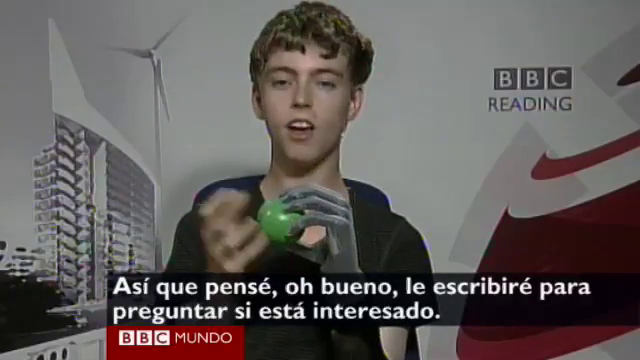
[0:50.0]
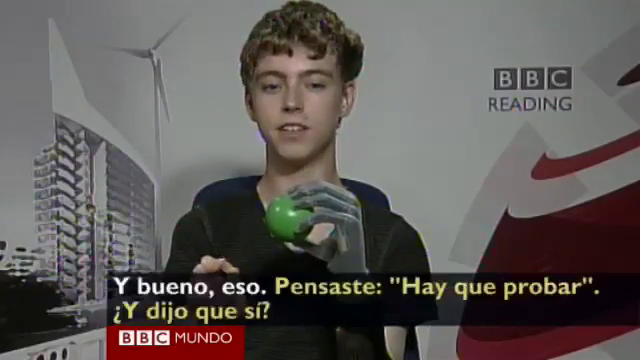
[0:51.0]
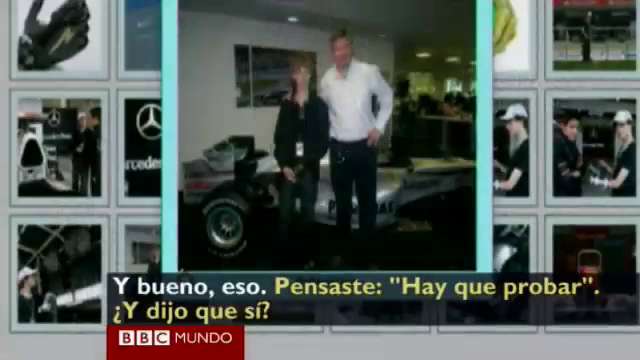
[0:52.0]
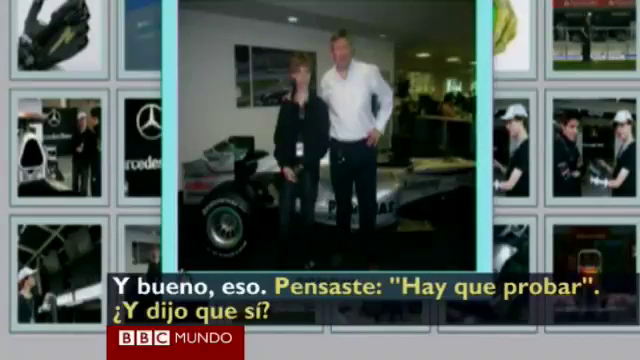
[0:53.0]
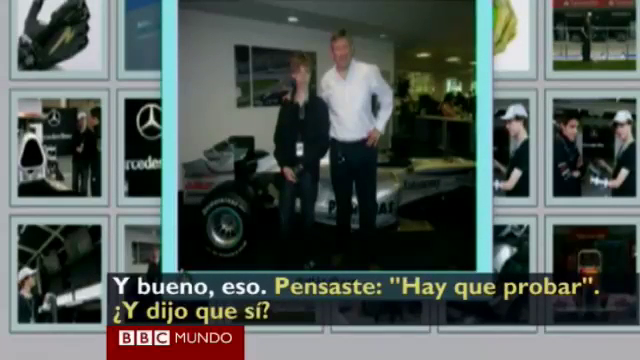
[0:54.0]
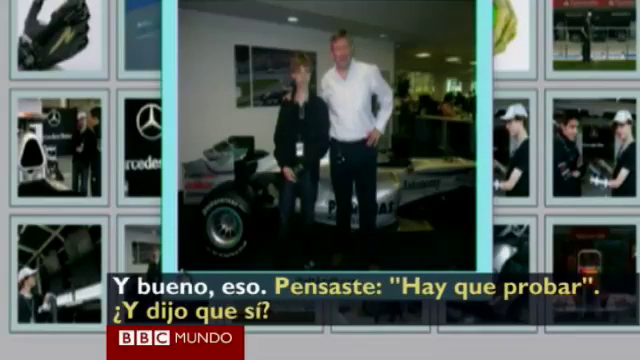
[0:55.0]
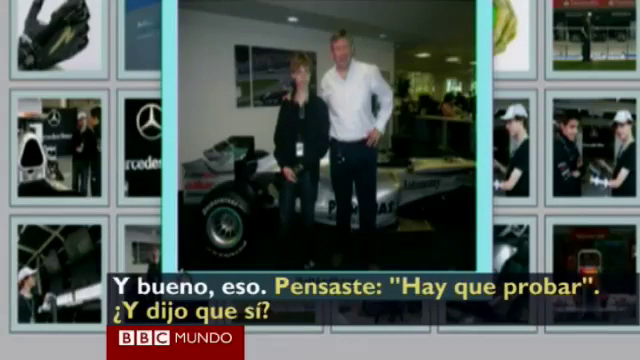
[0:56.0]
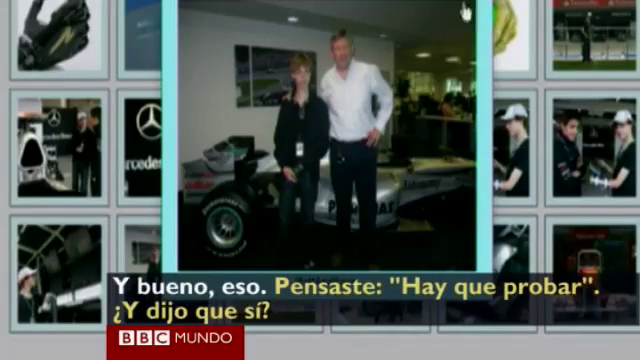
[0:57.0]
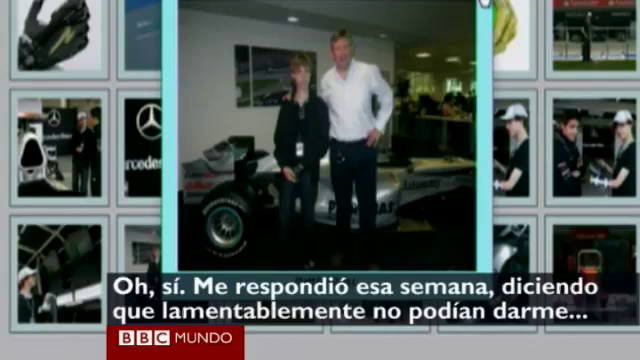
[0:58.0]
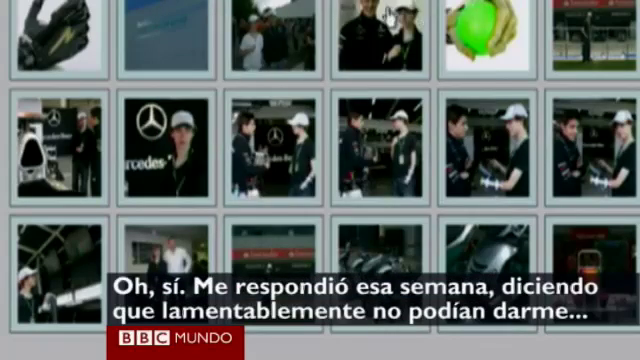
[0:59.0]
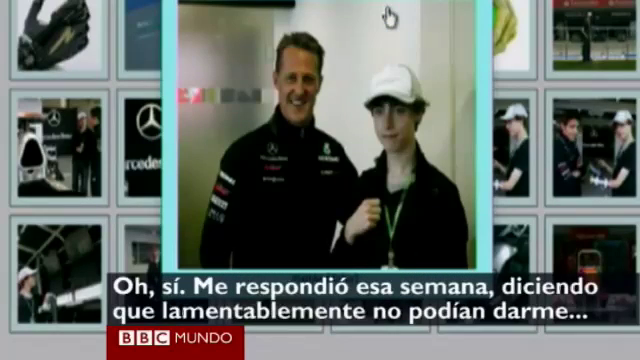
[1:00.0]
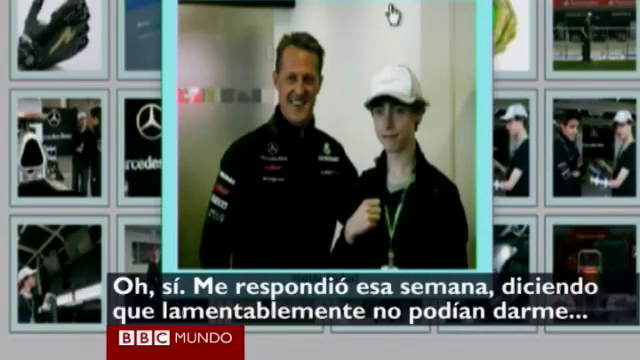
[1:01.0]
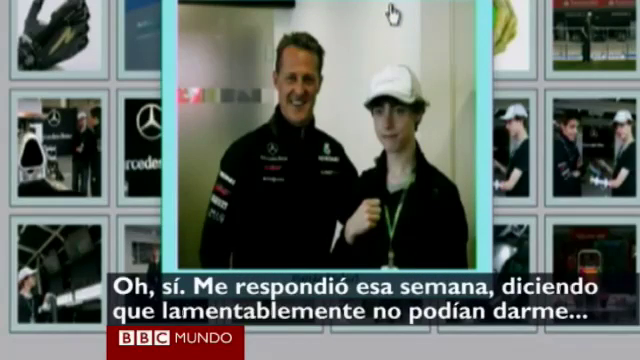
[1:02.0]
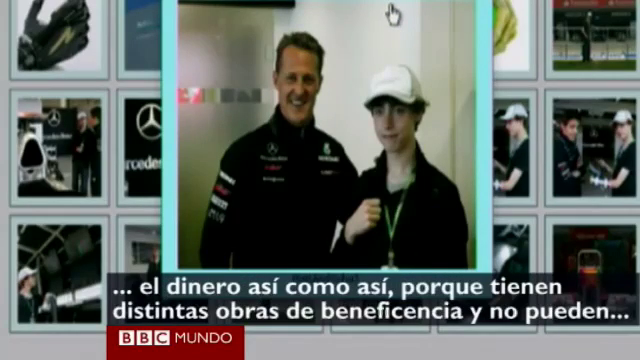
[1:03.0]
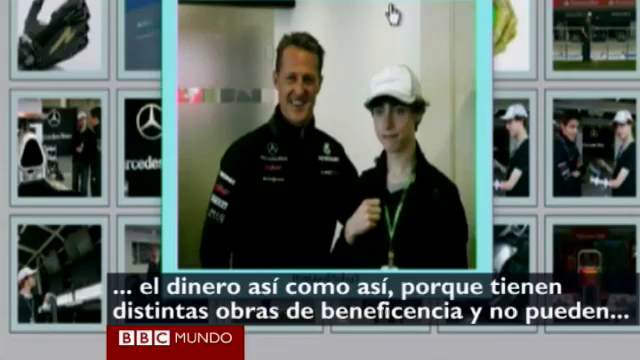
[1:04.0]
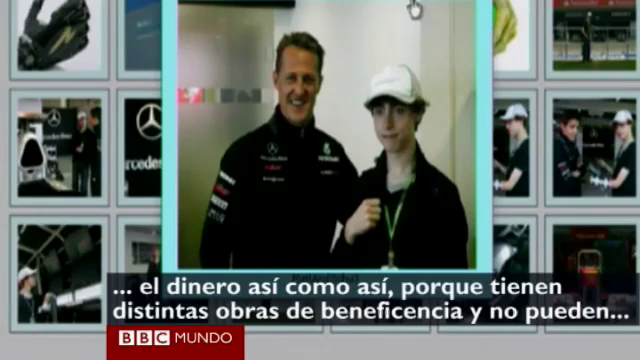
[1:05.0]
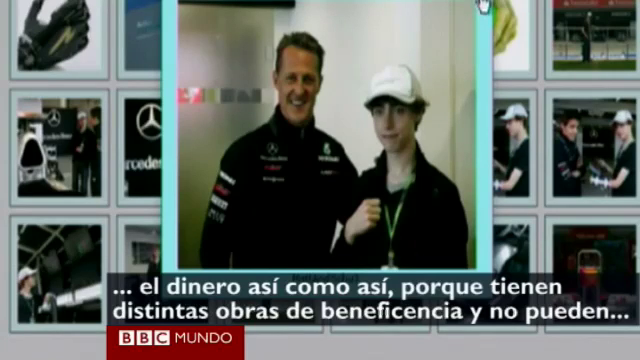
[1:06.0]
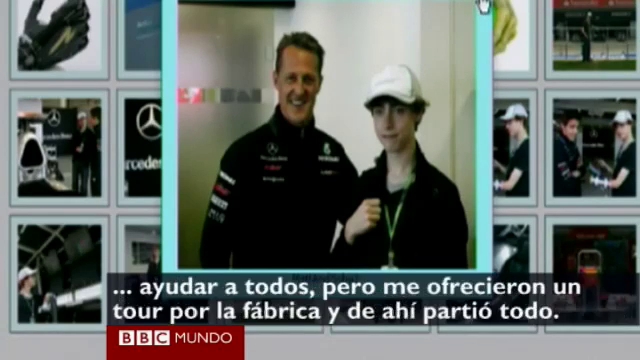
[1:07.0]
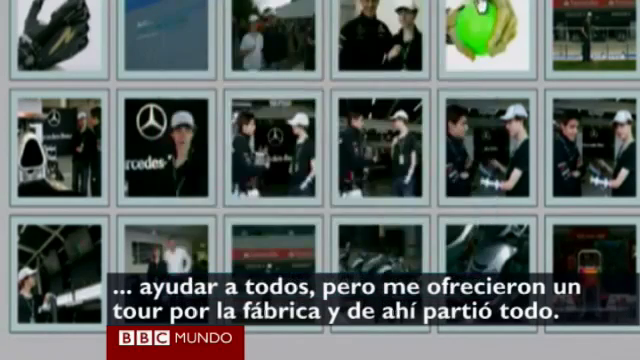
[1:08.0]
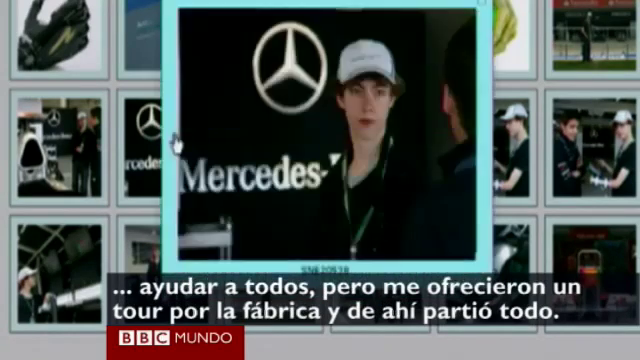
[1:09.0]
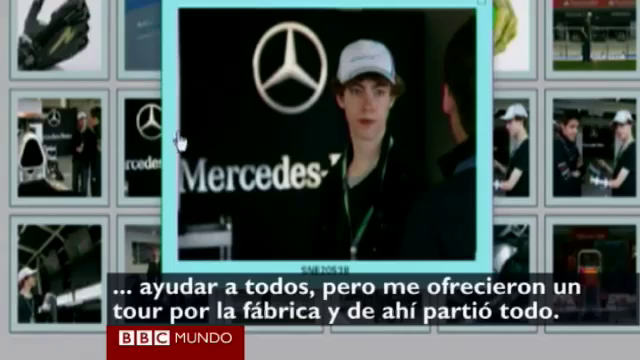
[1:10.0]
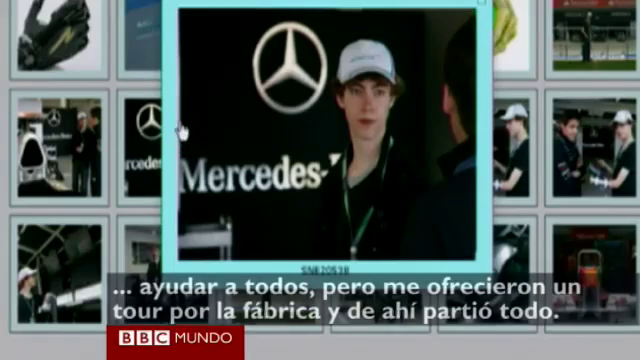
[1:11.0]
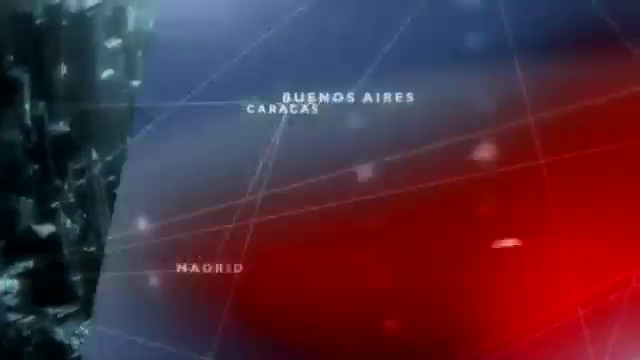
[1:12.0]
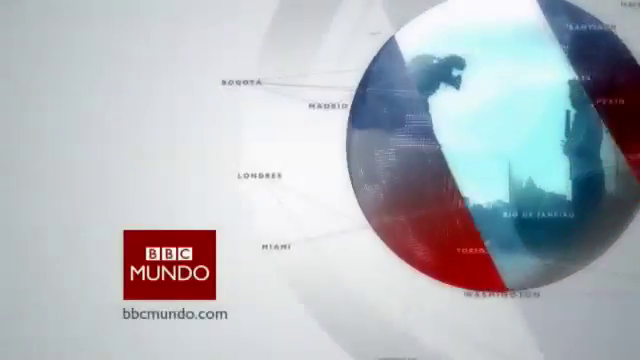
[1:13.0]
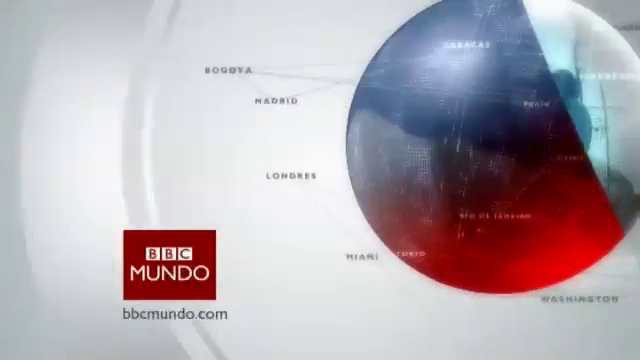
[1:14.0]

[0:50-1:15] Against a white backdrop, what looks like a red and white logo is on the right side of the screen, and a logo reading "BBC Reading" is in the upper right. To the left is what looks like a picture of a building with a large windmill over it. In the middle of the screen is a Caucasian boy with curly auburn hair, wearing a dark gray shirt. His left hand is mechanical and holds a green ball, and his right hand looks to be flesh and blood. He holds the ball with his fingertips and gestures with his right hand. The scene transitions to a series of pictures. In the foreground, a larger picture shows a couple standing in front of a car or motorcycle, which is a little unclear, with a white wall and a green open space behind them. Smaller pictures, mostly of pairs of people, are all around and behind it. Spanish captioning remains below. A mouse cursor moves across the top of the screen, clicks the large picture, and clicks on a different picture, bringing up a large shot of an adult man with what looks like the boy from before. The boy's right hand is raised to his chest, while his left arm is sleeved and the hand is not visible. He wears a white cap. The mouse remains at the top of the screen and the captions continue to change. The mouse moves a little to the right, clicks that shot, and clicks on another, showing a picture of the boy in a hat with a green loop around his neck, possibly for a whistle or medal, the item itself being off screen, and a Mercedes logo in the background. The mouse moves along the left side. The video then goes back to the opening BBC Mundo logo: a white backdrop with a sort of chrome and red sphere containing a picture, which rotates.